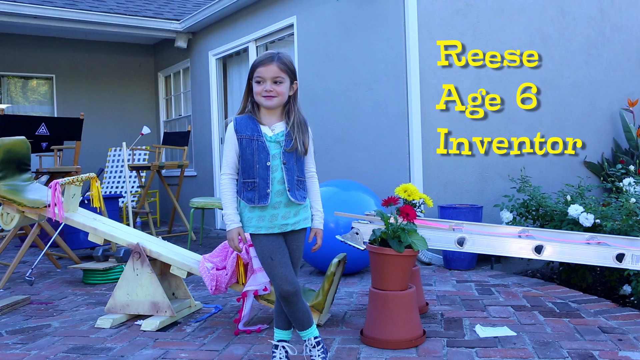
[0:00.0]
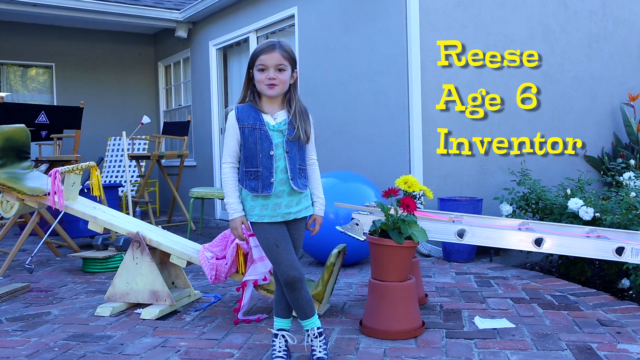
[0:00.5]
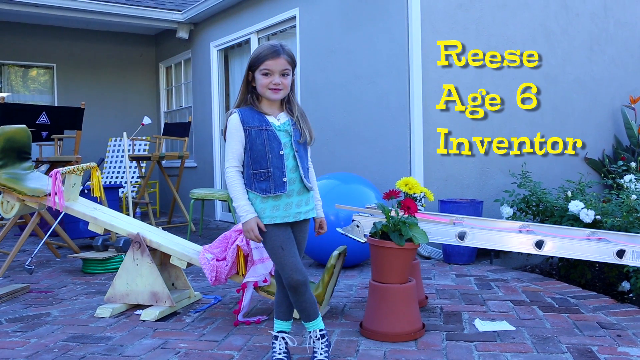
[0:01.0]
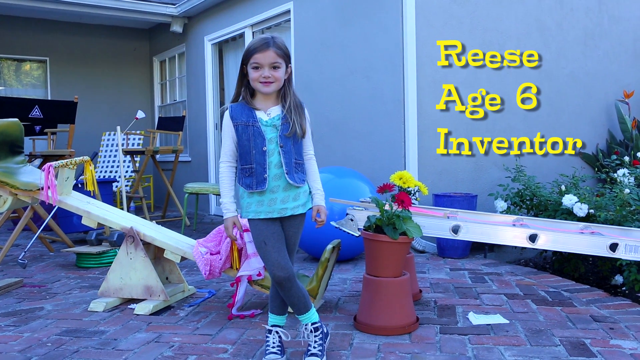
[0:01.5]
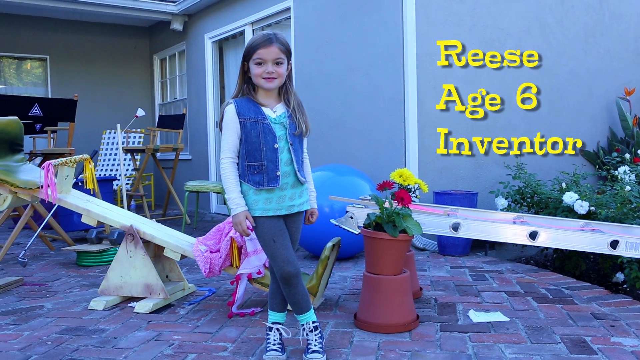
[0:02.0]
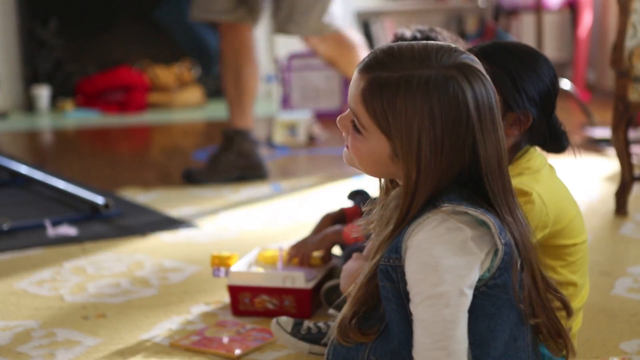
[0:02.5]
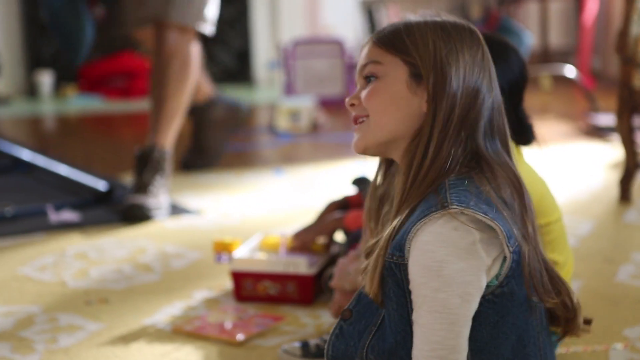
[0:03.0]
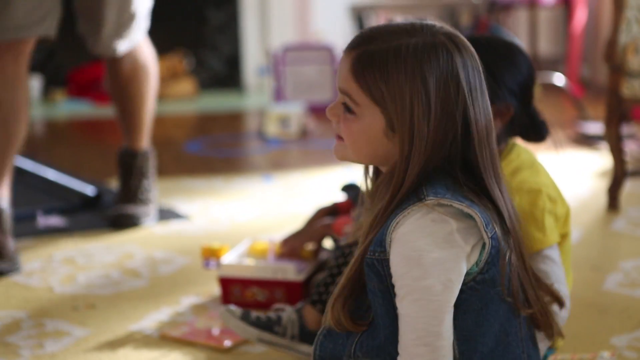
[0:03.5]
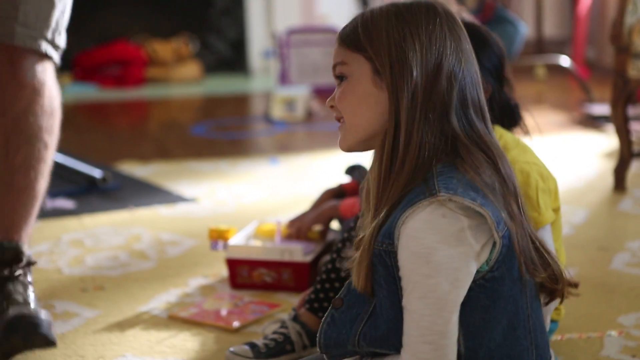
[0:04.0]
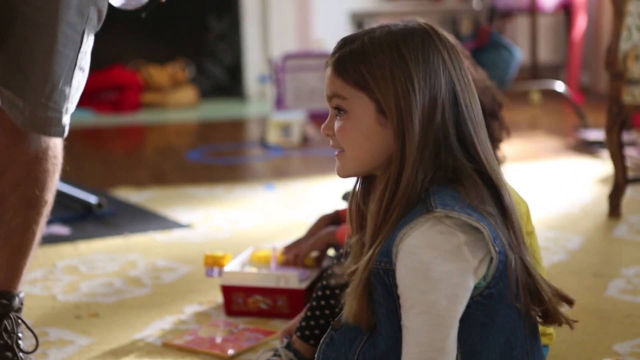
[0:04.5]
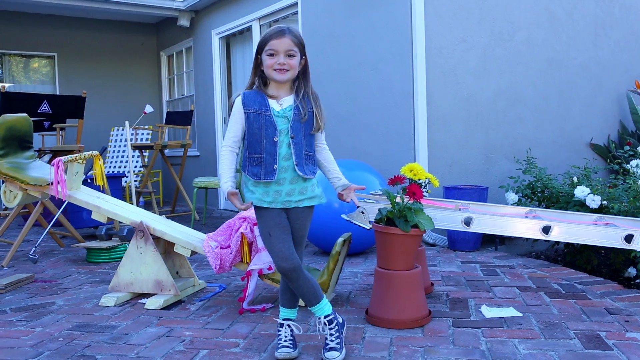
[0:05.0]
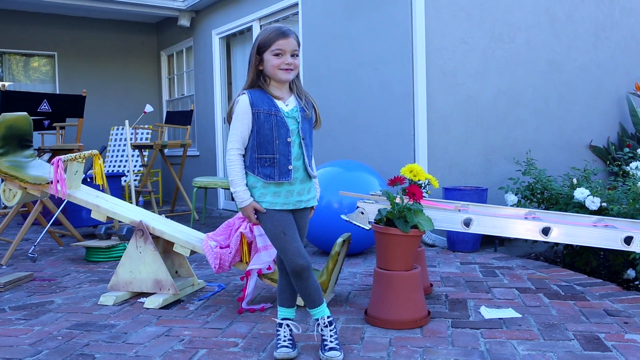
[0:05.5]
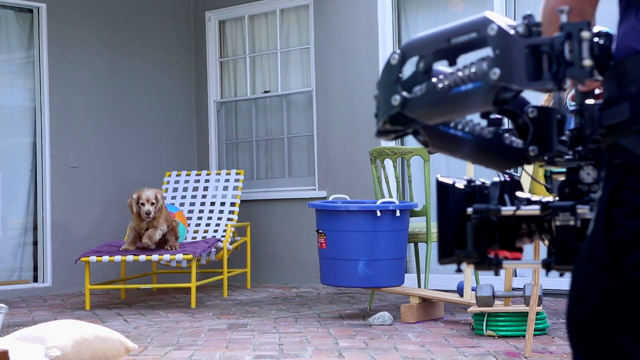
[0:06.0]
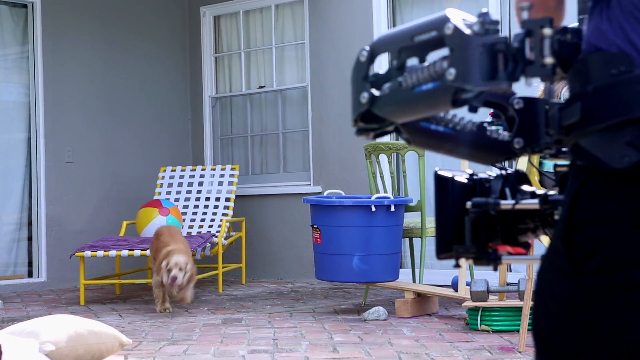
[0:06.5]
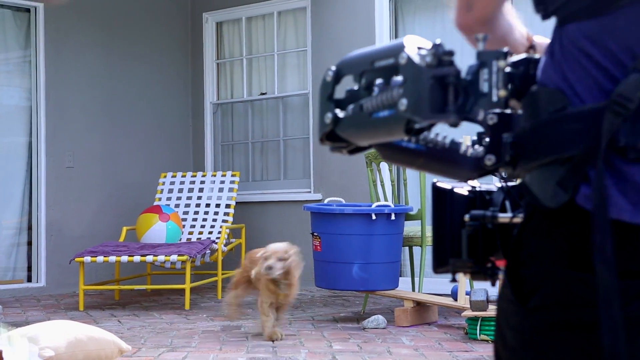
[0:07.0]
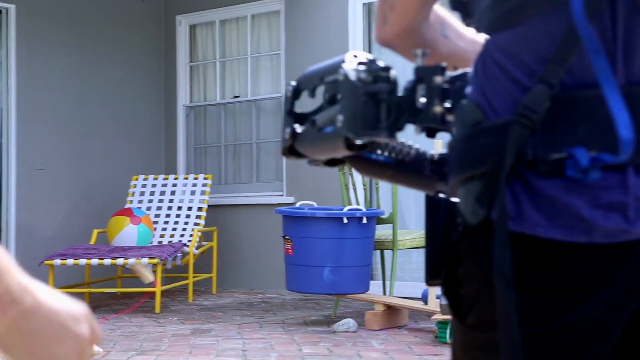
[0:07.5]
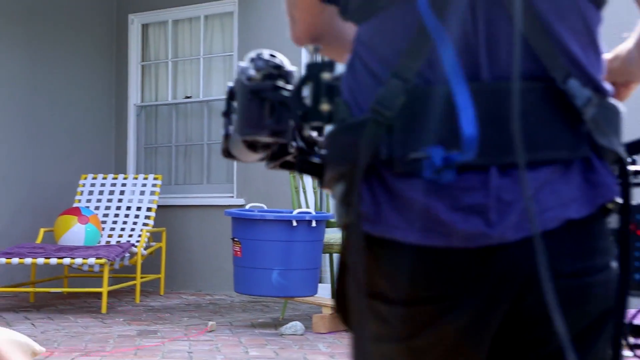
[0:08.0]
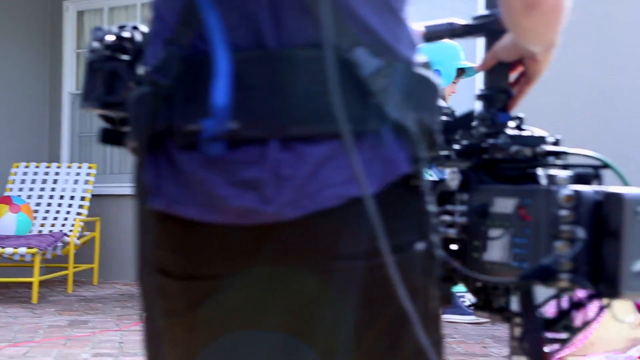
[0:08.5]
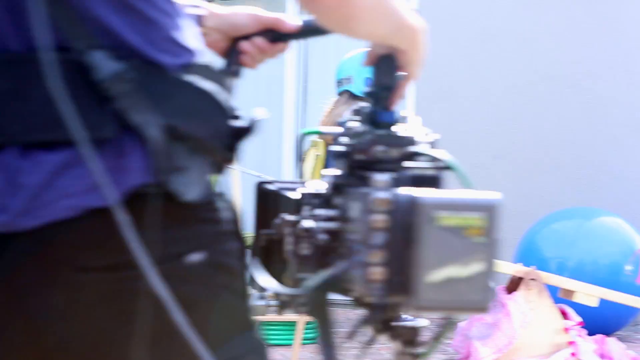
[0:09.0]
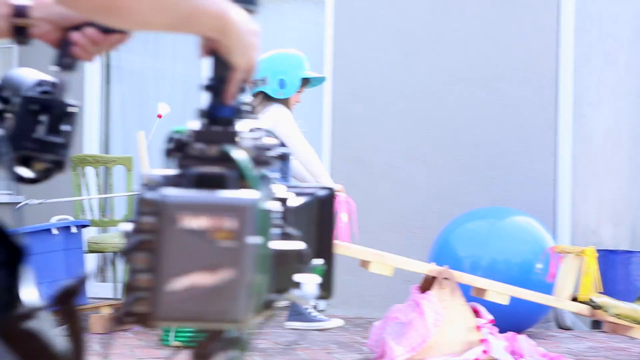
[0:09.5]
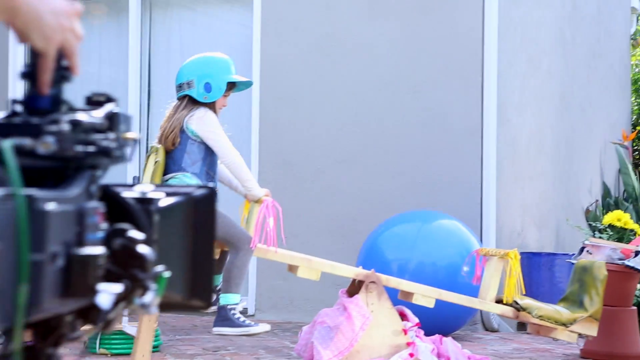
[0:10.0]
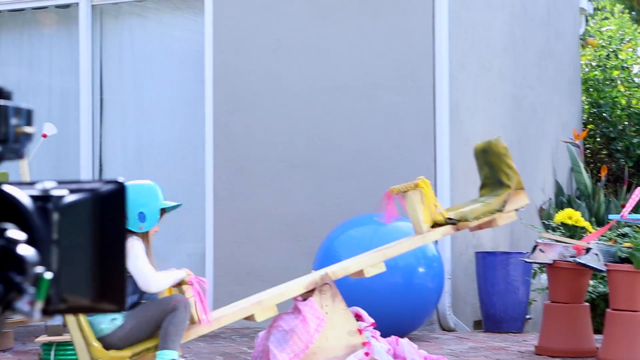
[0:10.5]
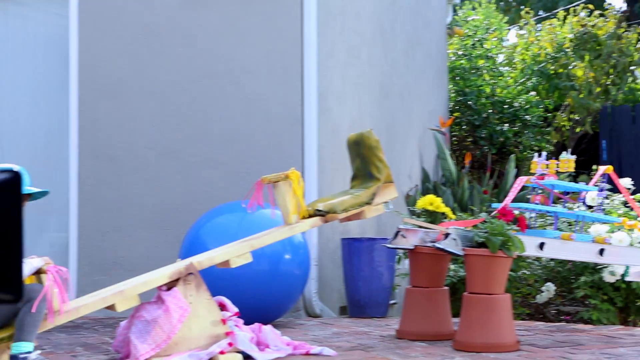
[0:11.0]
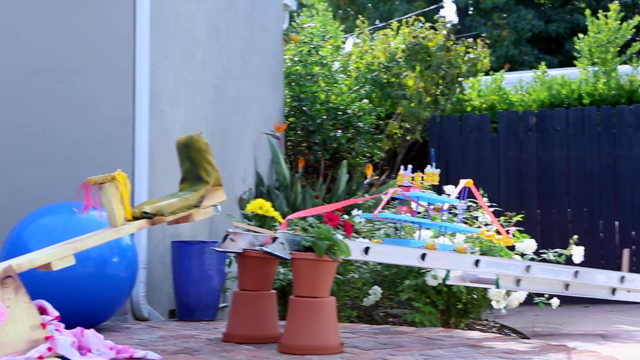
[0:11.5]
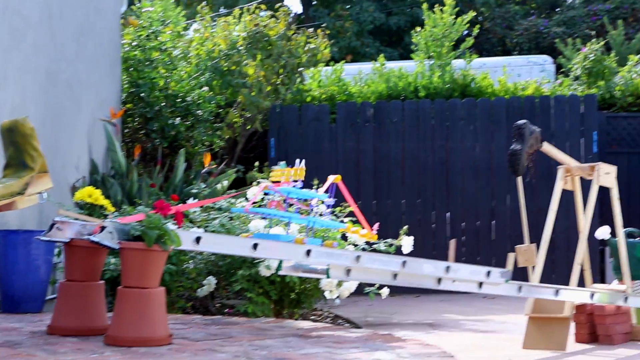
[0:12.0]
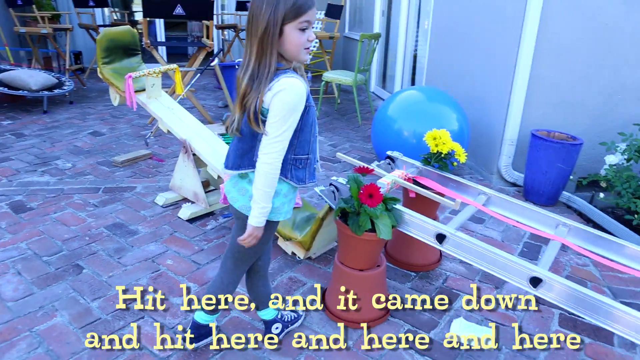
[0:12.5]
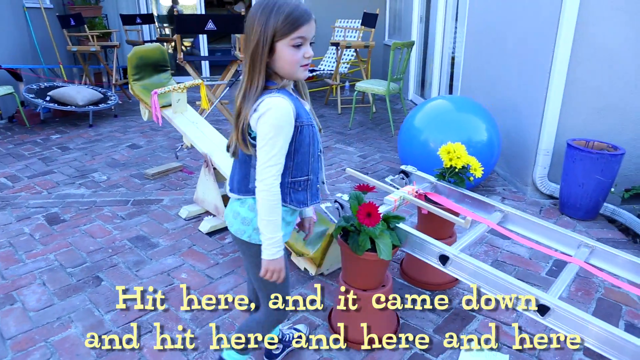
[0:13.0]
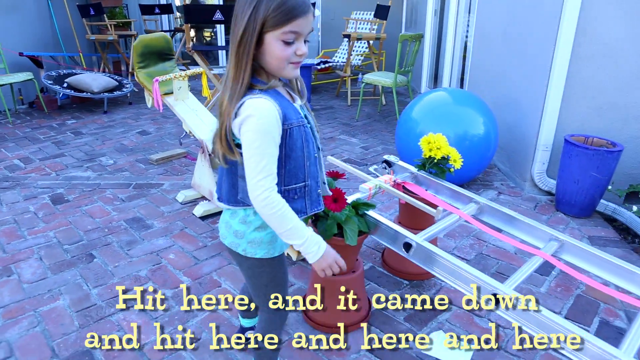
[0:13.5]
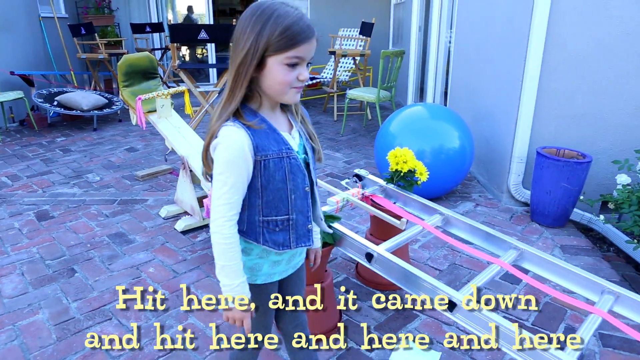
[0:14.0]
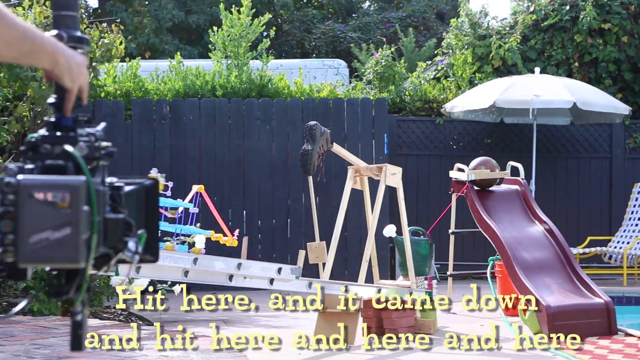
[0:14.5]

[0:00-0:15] A six-year-old inventor named Reese demonstrates her invention, which appears to be a childlike Rube Goldberg-type machine. She is the only girl in the scene, and she is wearing a white blouse with a blue vest. A dog is present, and someone is capturing the video with a camera. The setting is the backyard of a house, where a lot of playground equipment and child toys are assembled together in a Rube Goldberg-like fashion. The scenes show her in various states of activity.